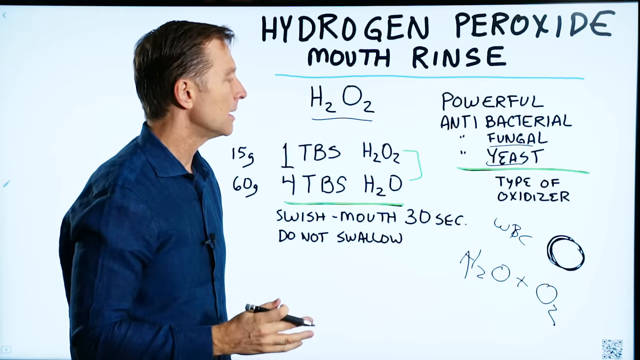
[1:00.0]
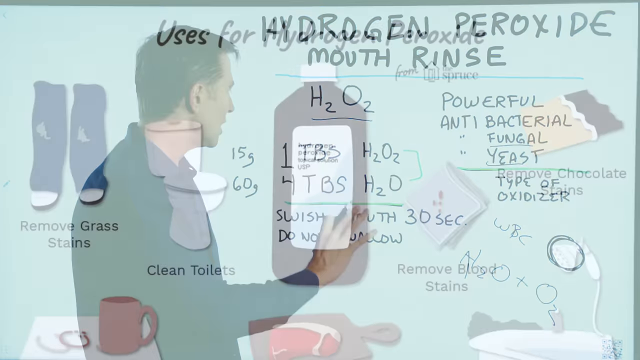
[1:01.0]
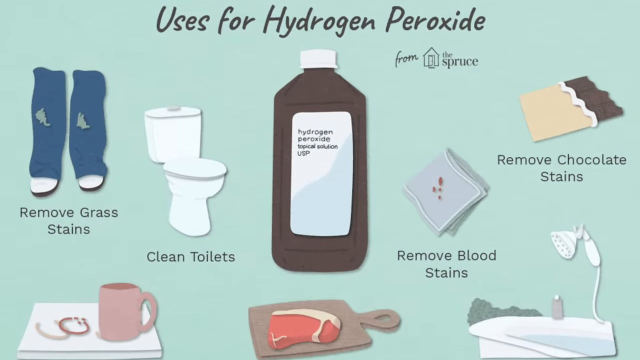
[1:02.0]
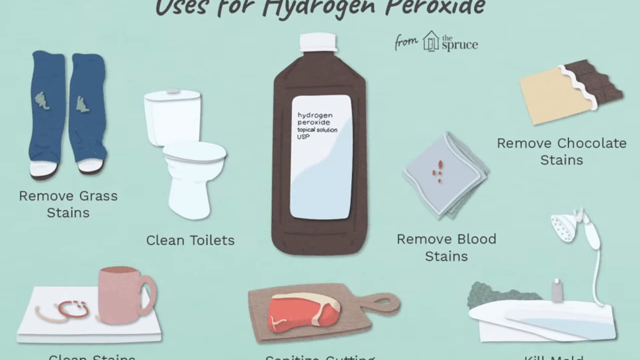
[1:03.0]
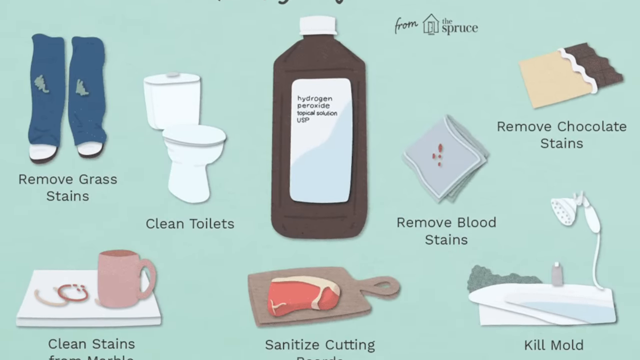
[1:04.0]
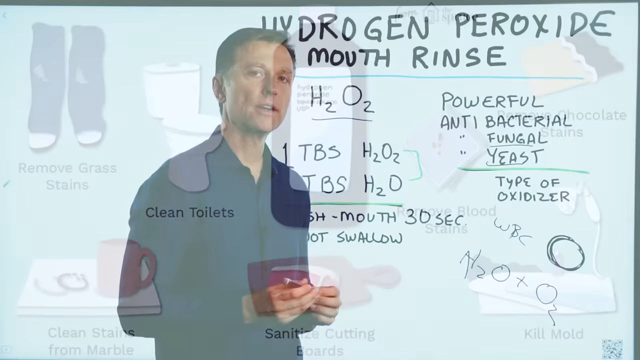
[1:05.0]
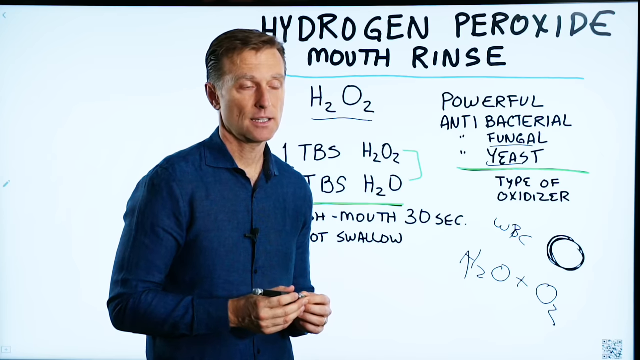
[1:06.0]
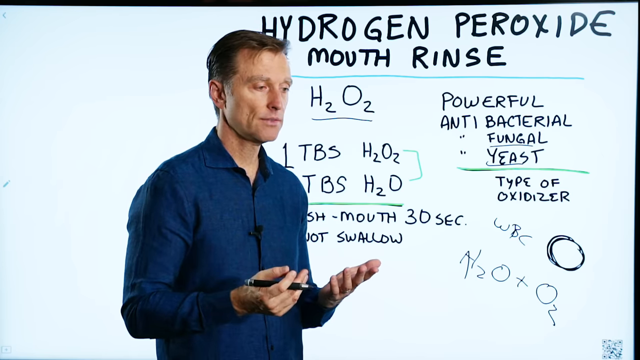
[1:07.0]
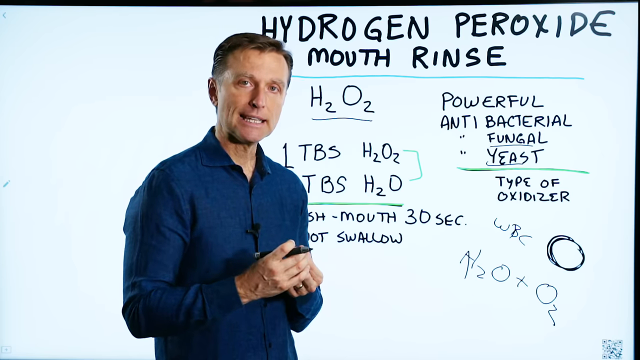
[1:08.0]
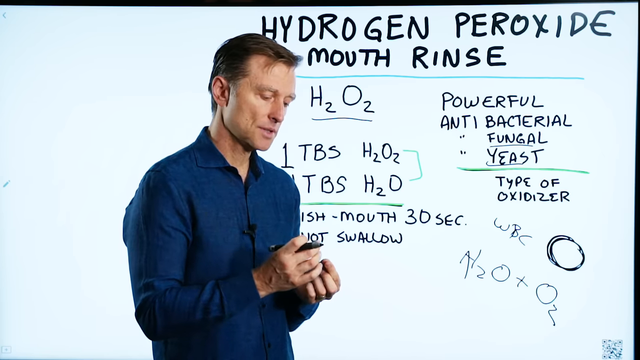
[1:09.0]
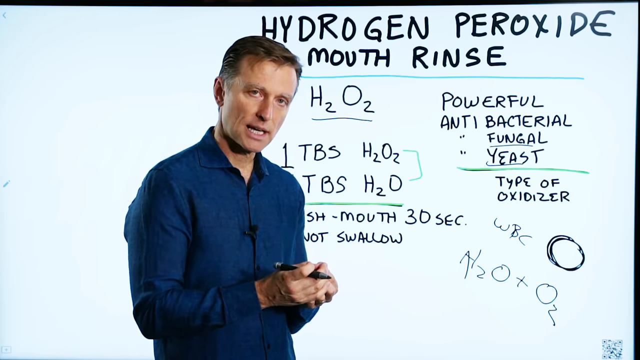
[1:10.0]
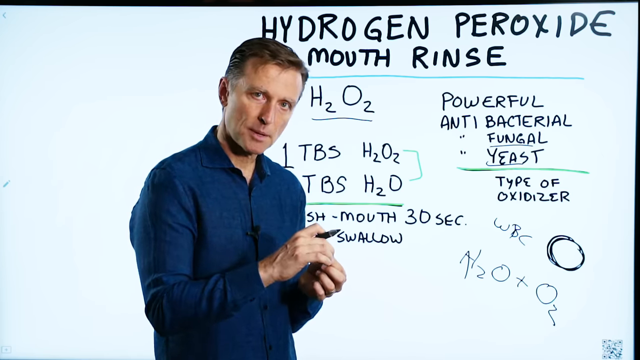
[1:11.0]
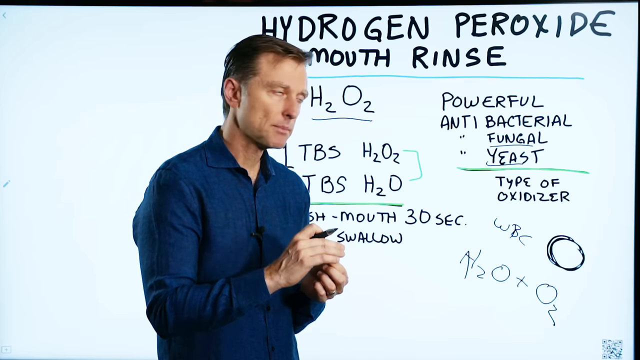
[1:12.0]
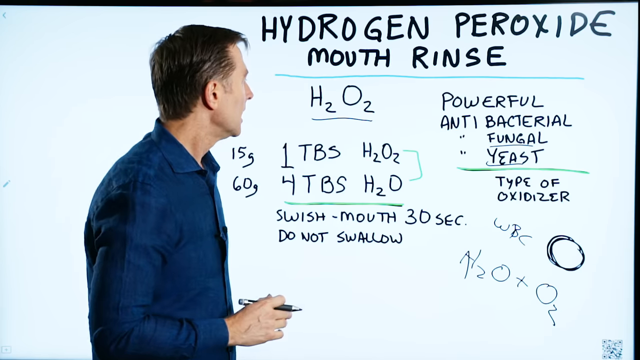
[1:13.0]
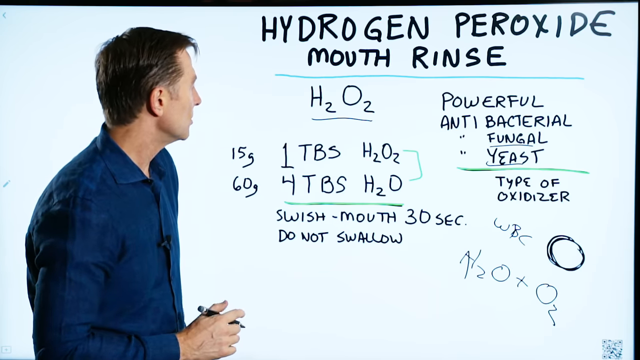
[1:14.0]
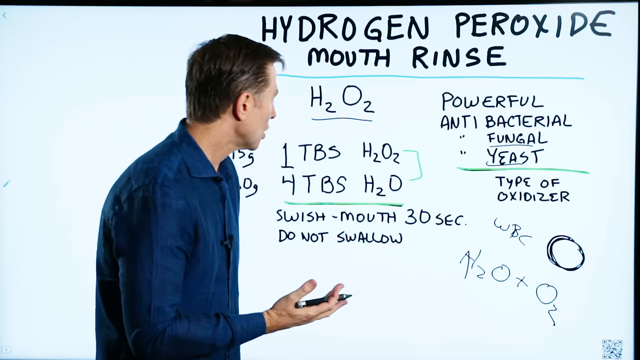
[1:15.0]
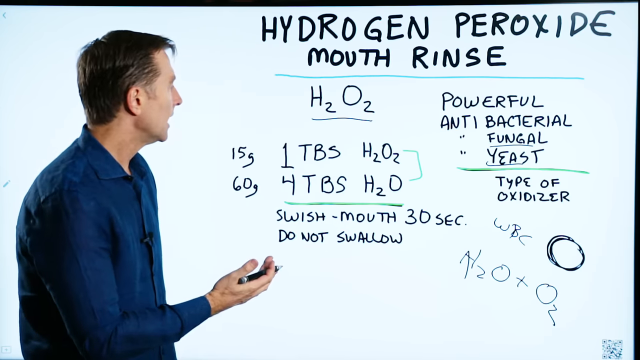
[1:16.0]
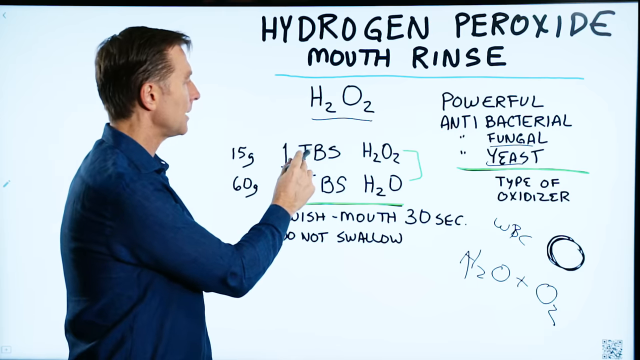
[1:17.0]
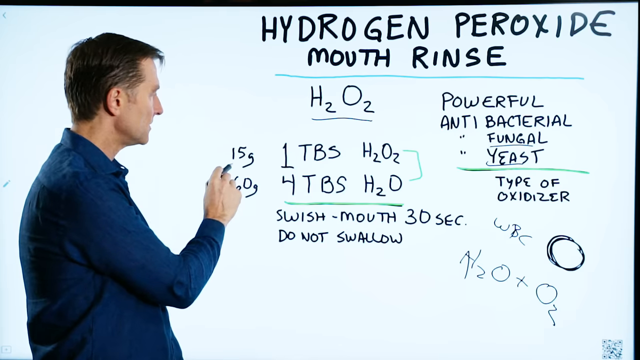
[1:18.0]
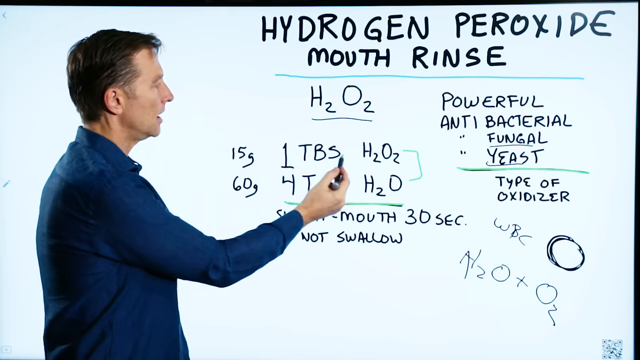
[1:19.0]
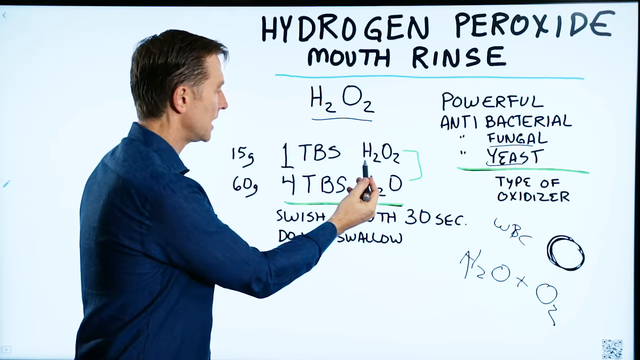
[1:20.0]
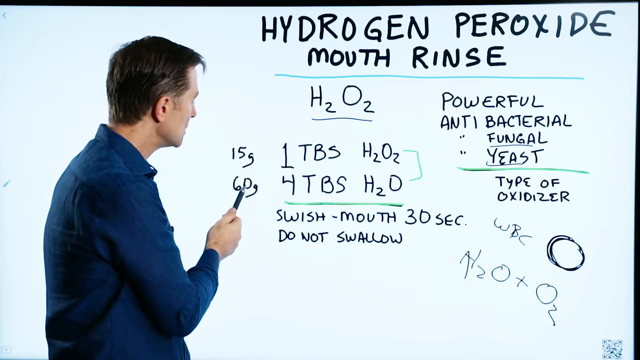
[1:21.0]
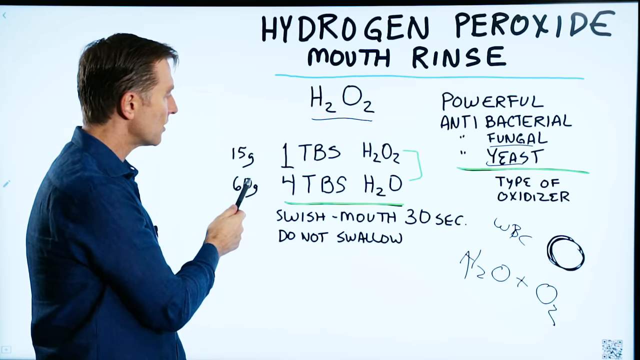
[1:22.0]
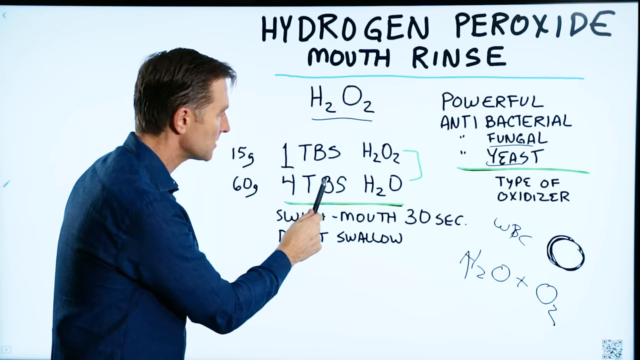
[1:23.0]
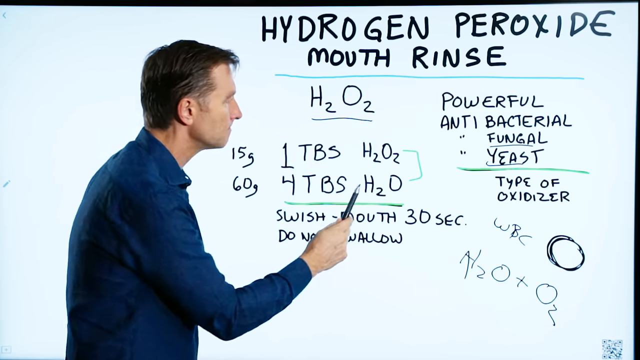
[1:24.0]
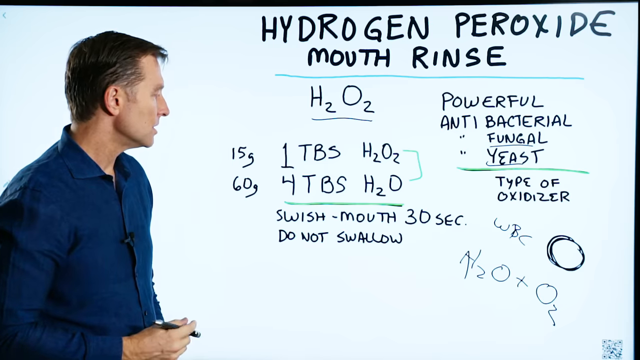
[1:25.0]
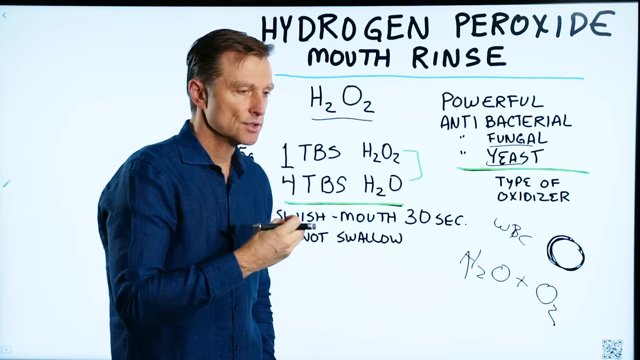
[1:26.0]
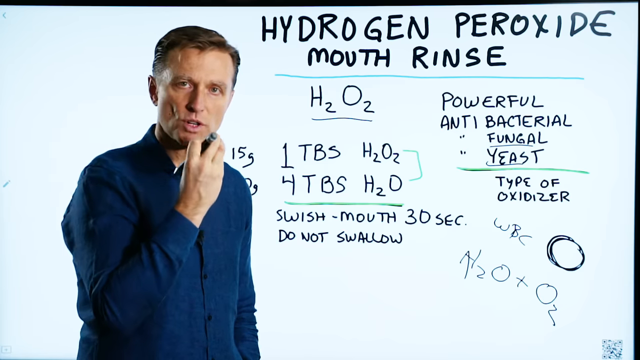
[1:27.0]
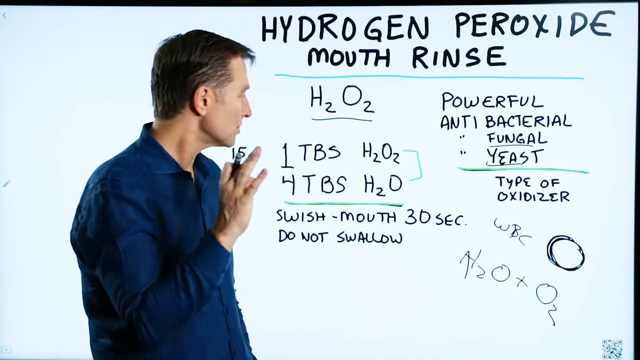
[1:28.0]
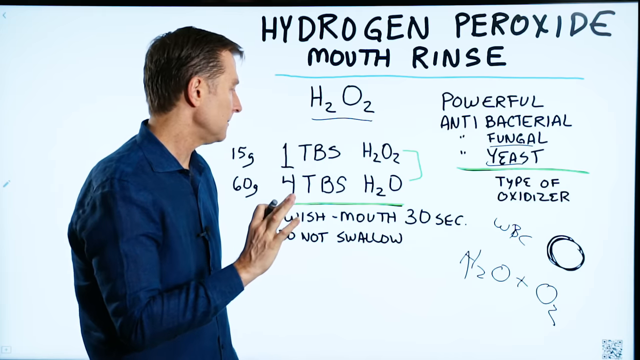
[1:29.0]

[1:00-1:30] A set of items appears: socks, a toilet, a bottle, a towel, chocolate, a cup of tea, meat, and something like a bathing tap, each in different colors. There are two socks, the toilet is white, the bottle is brown, the towel is grayish with blood stains, the chocolate is brownish and still in its paper, the cup is pink on a white table, the meat is red on a board, and the bathing tap is white. The man continues explaining and indicates 15, H2O, 60 gram, HTBS, and H2O again. He uses his hands to point to his mouth, apparently indicating 30 seconds.